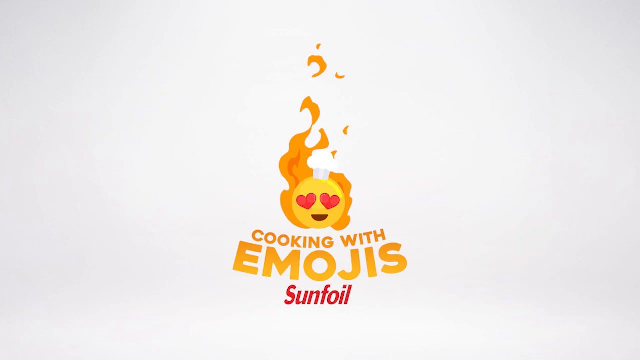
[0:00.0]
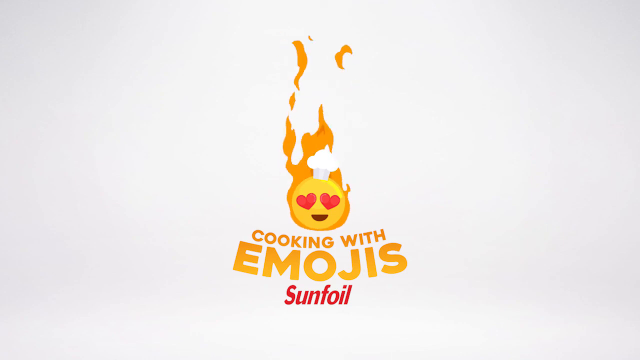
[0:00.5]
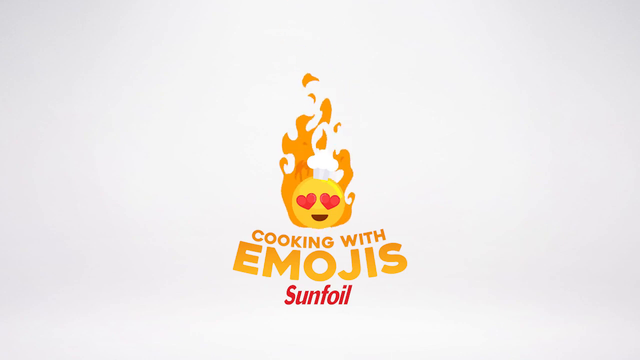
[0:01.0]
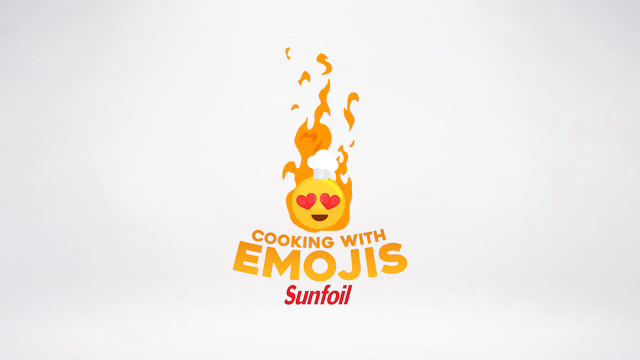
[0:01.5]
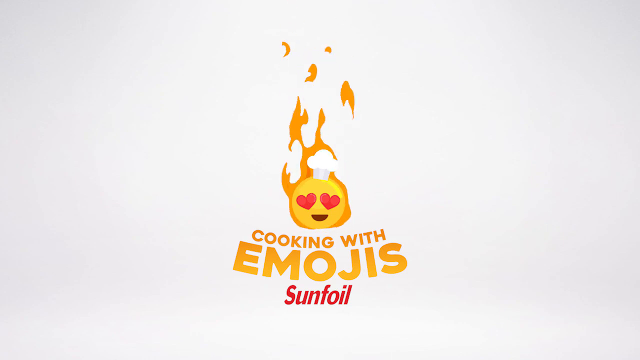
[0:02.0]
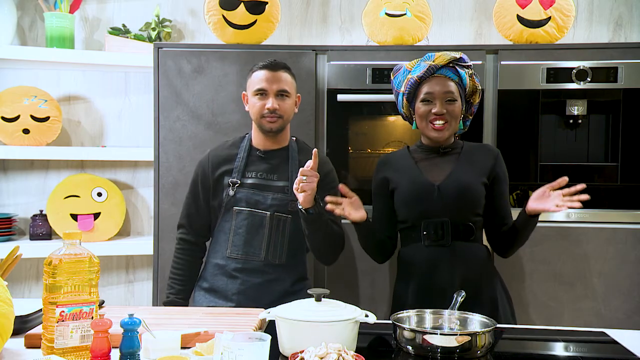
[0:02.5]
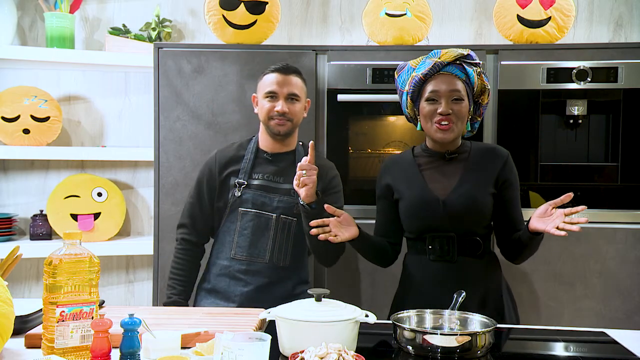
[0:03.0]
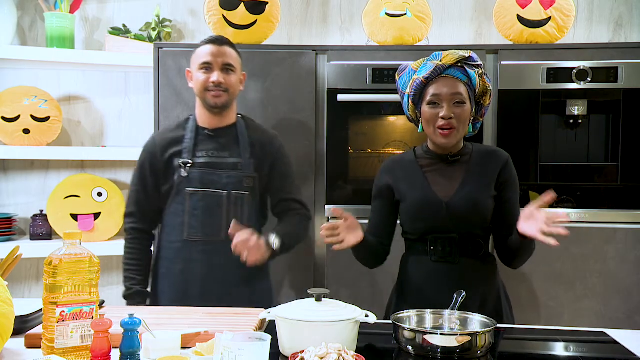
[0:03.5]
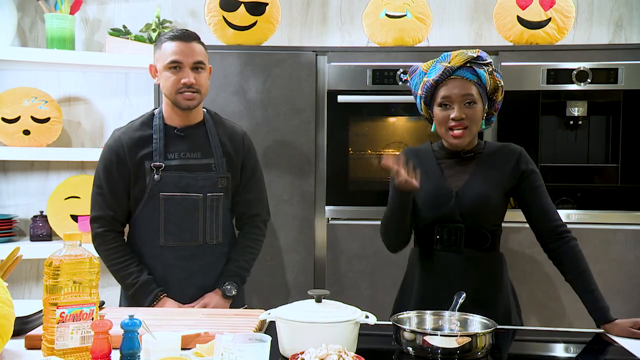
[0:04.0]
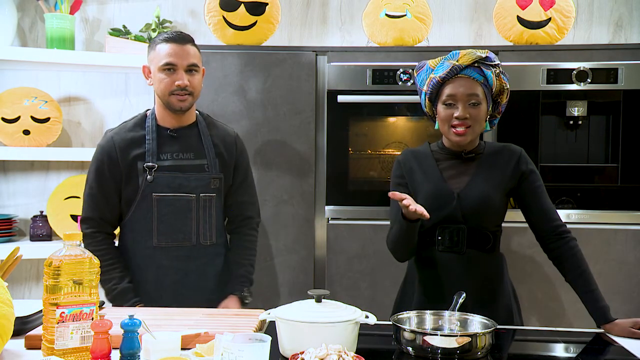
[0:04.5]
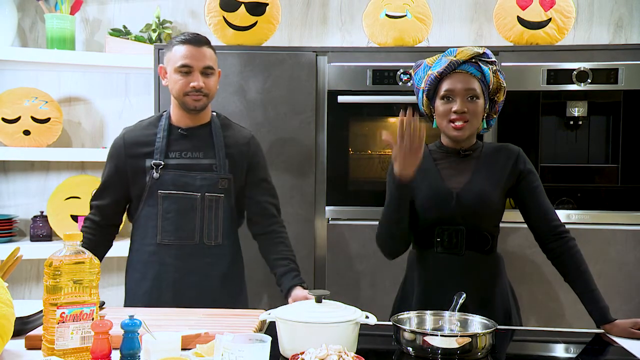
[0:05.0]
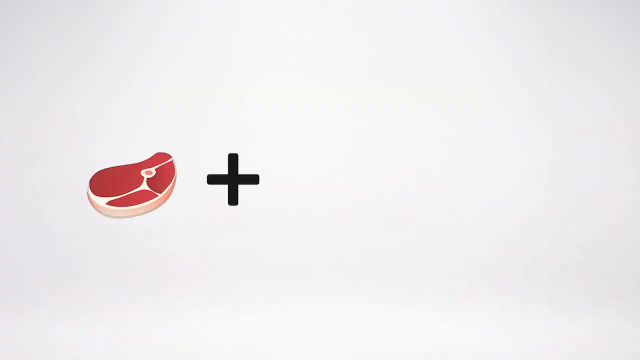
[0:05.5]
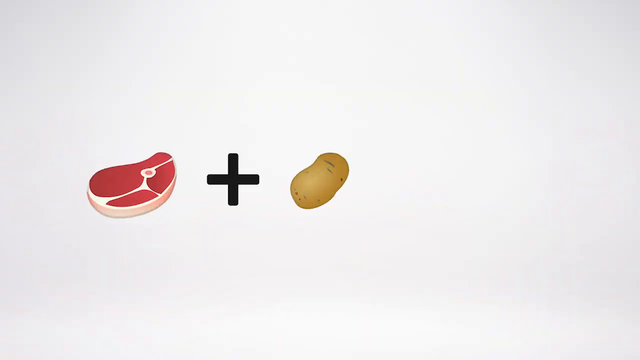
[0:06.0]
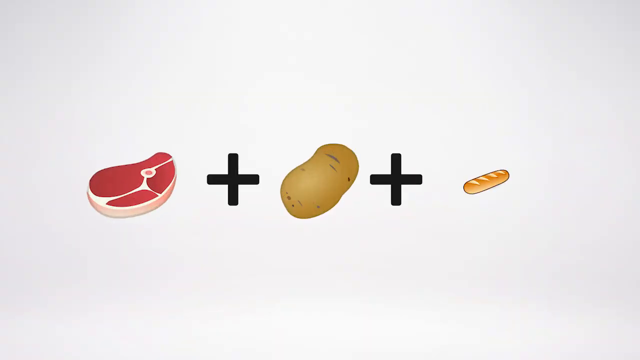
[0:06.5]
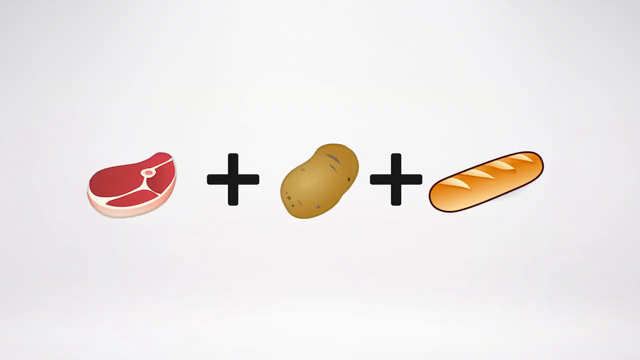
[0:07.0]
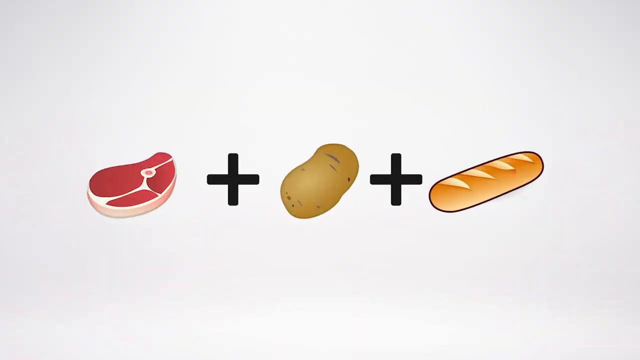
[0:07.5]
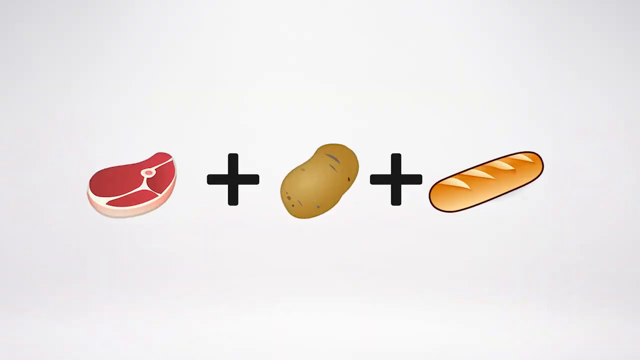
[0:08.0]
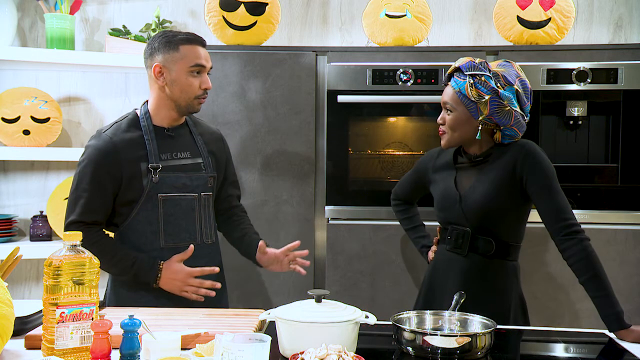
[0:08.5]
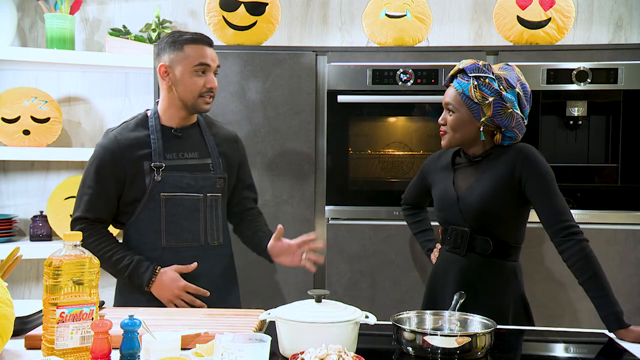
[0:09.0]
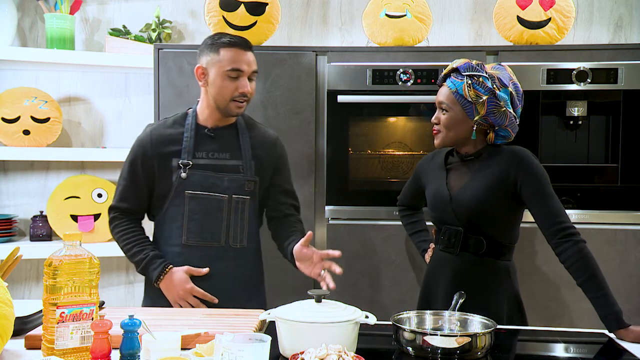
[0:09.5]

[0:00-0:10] There is a stove behind two people. One is a Black woman with a blue and yellow turban-type thing on her head, dressed all in black and wearing teal earrings. Next to her is a man wearing what looks like a jean-type apron and a black shirt. A picture, almost cartoonish, of a steak plus a potato plus bread appears. The man talks, gesturing with his left hand. The woman uses both of her hands, then uses her right hand as she talks about the meat, or apparently the food.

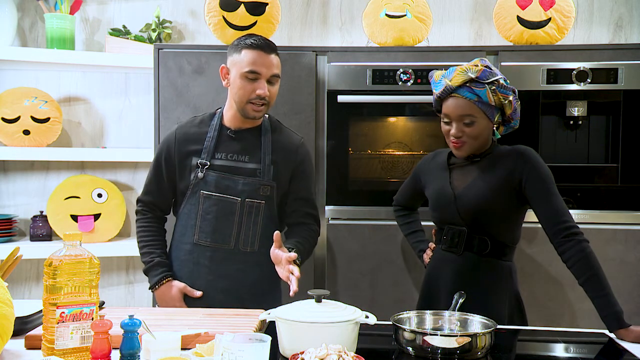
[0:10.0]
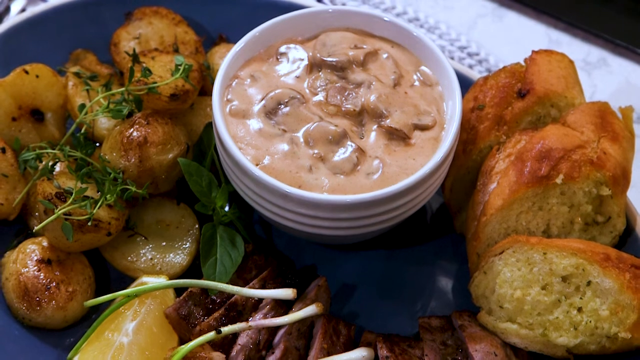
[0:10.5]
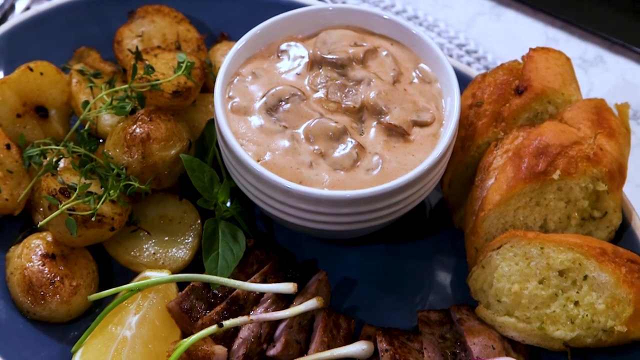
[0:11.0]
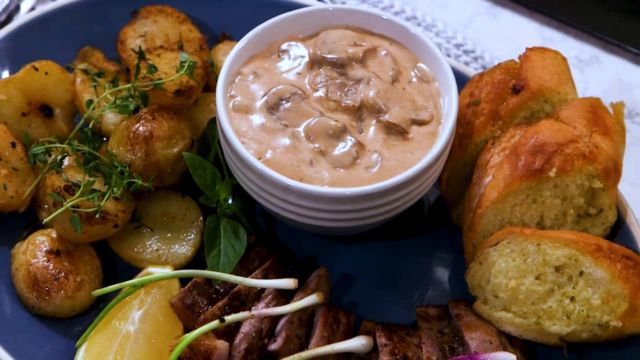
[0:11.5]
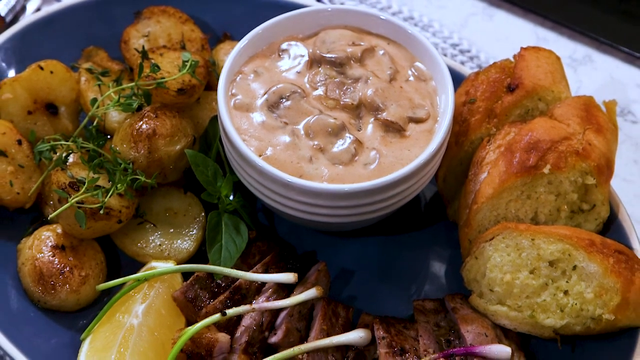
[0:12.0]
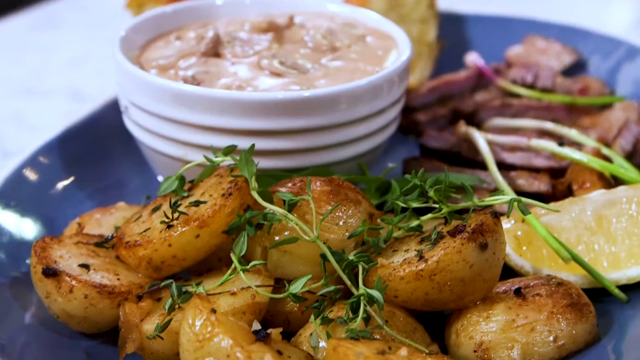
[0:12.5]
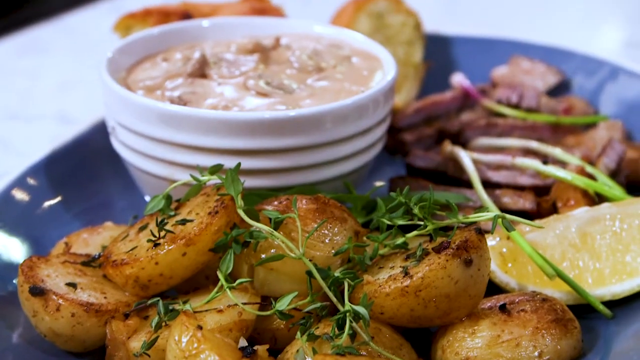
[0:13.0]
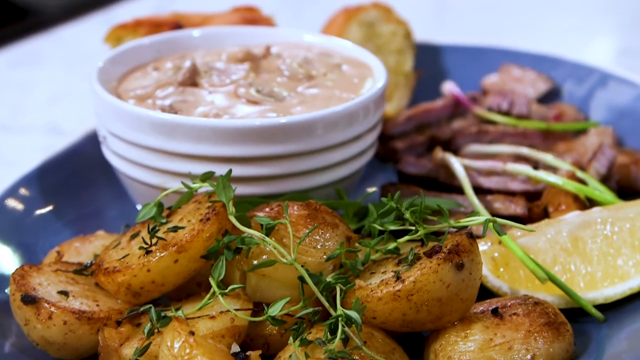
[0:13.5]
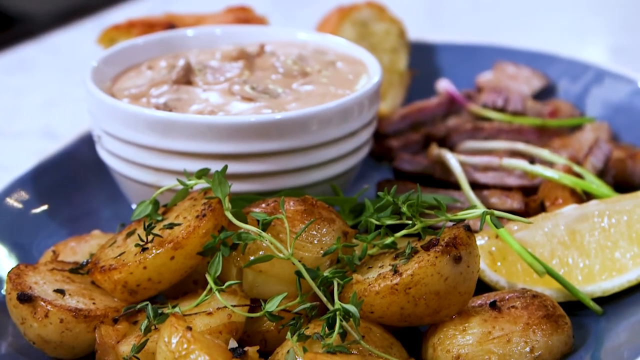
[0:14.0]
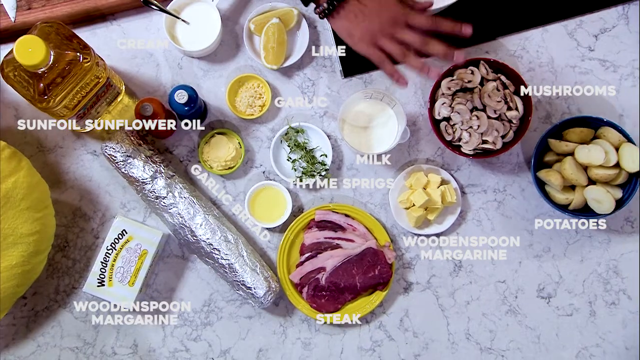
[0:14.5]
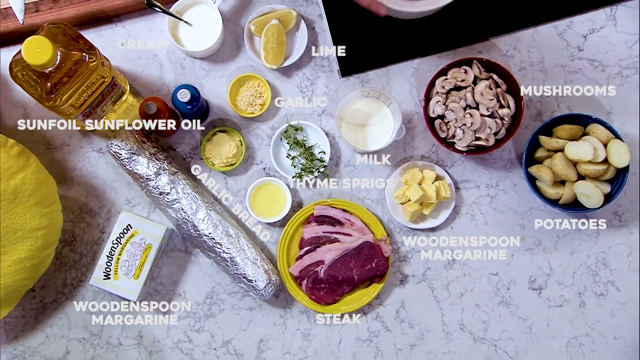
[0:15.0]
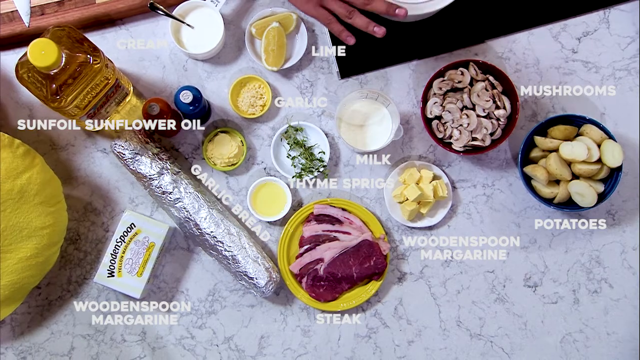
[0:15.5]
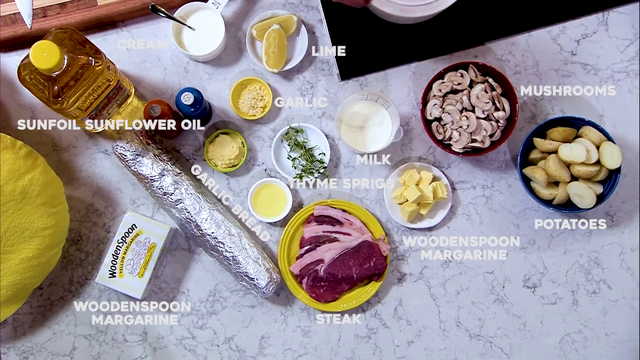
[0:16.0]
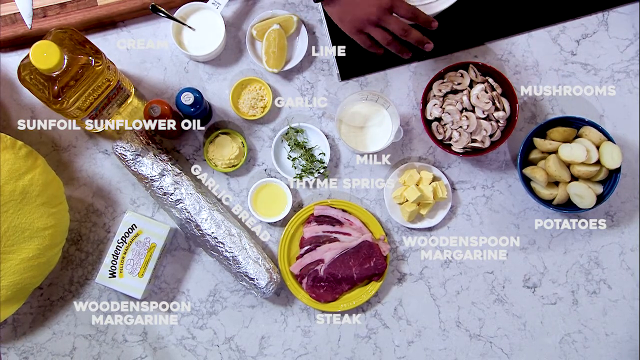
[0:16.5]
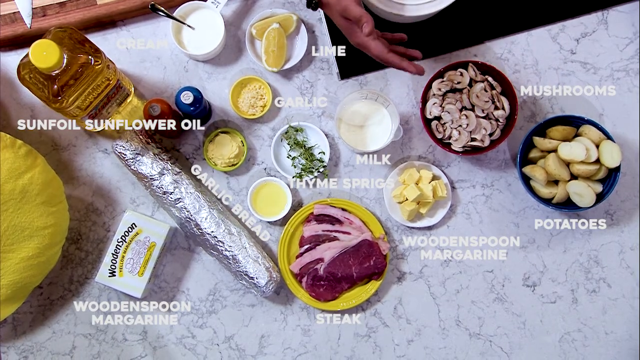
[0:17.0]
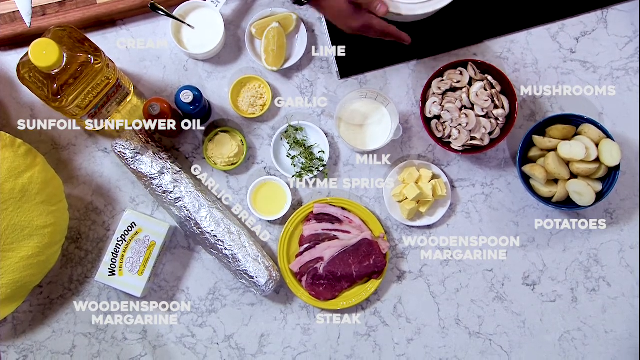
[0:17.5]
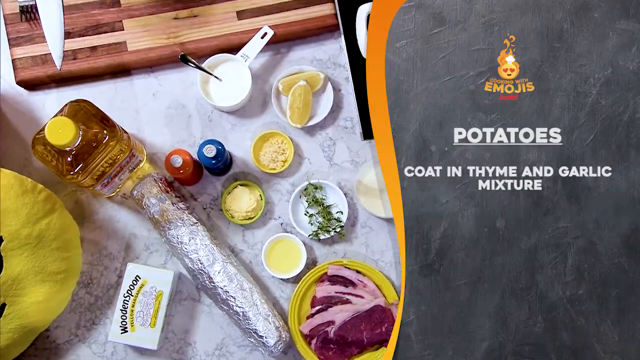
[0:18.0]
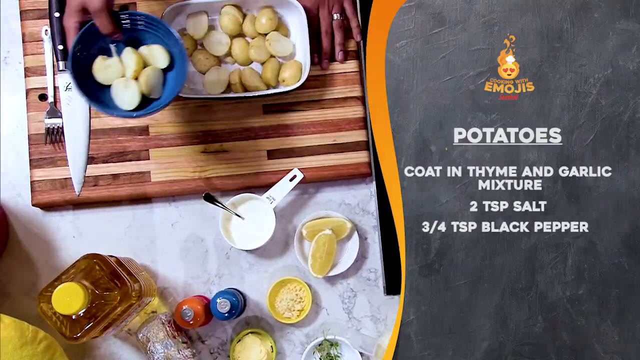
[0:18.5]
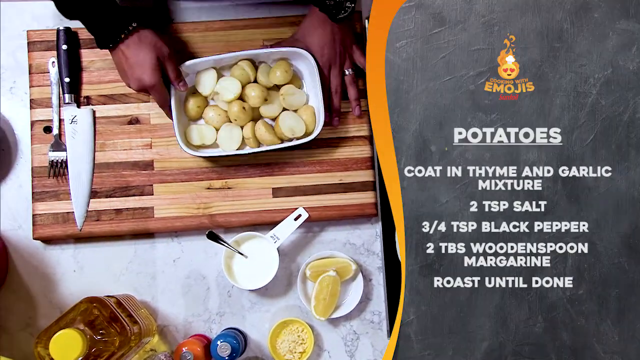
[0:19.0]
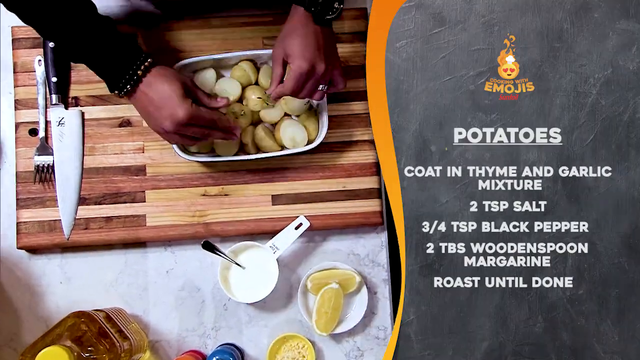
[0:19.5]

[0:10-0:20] A picture shows a plate of potatoes that look fried, with some parsley and little lettuce pieces, what looks like some type of mushroom sauce, and some garlic bread. The food is on a blue plate with what looks like a little doily underneath it. Next comes the kitchen counter, it seems, with all the ingredients laid out: lime, garlic, sunflower oil, mushrooms, potatoes, a wooden spoon, margarine and garlic bread, plus what look like the steaks on a plate. A recipe for the potatoes is given: coat in the thyme and garlic mixture, two teaspoons of salt, three quarter teaspoon of black pepper, two tablespoons of margarine, and roast until done. On a cooking board with a large knife and a fork, hands put all the spices in the potatoes.